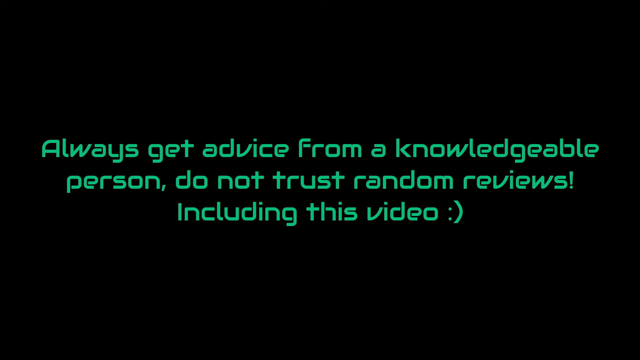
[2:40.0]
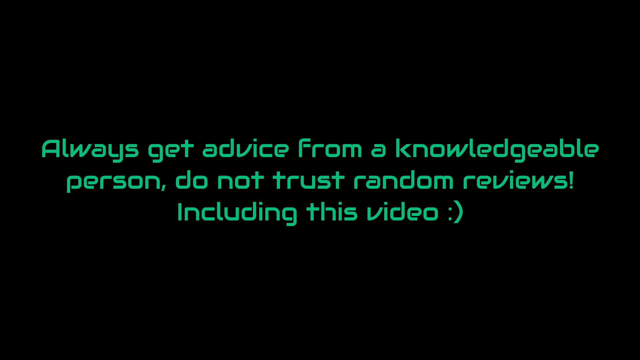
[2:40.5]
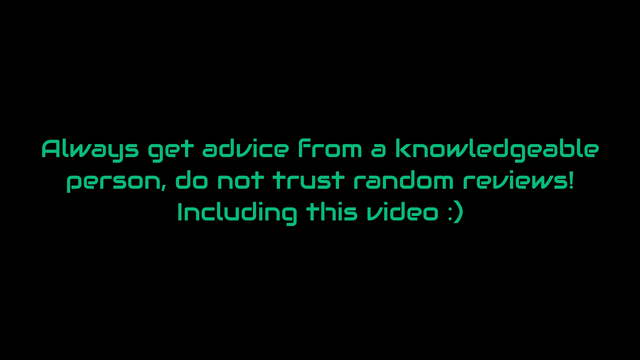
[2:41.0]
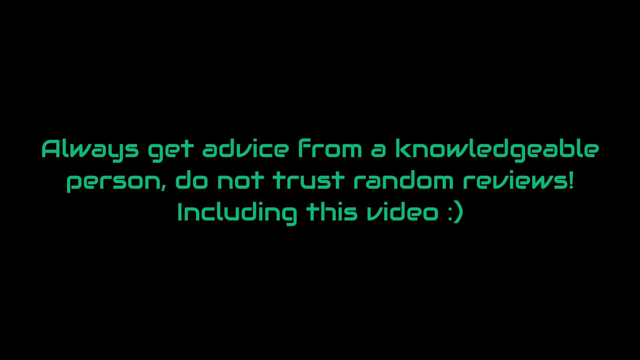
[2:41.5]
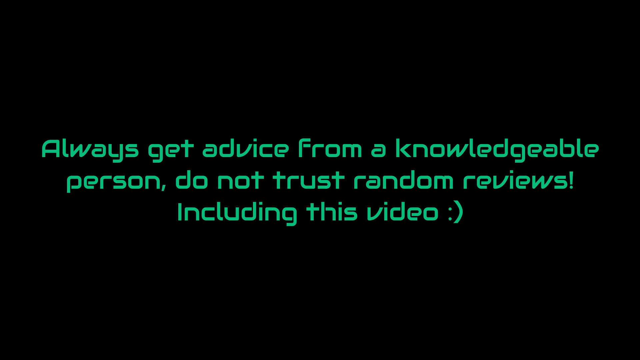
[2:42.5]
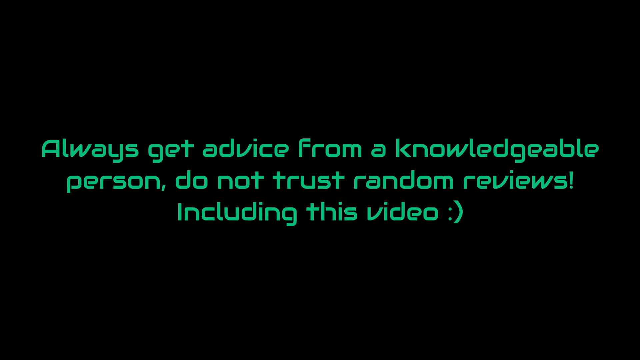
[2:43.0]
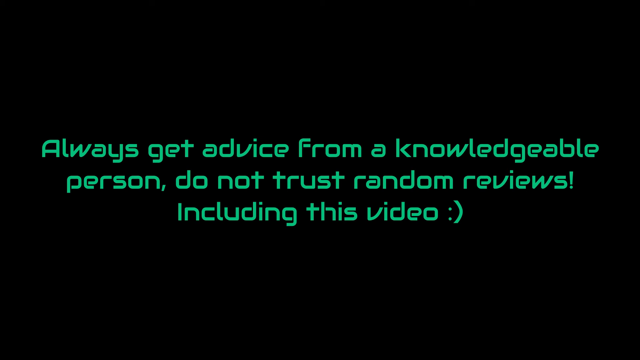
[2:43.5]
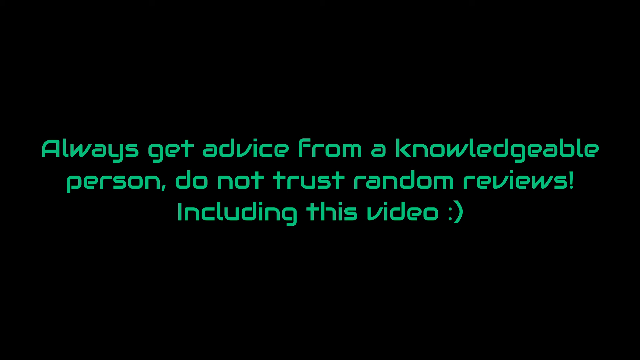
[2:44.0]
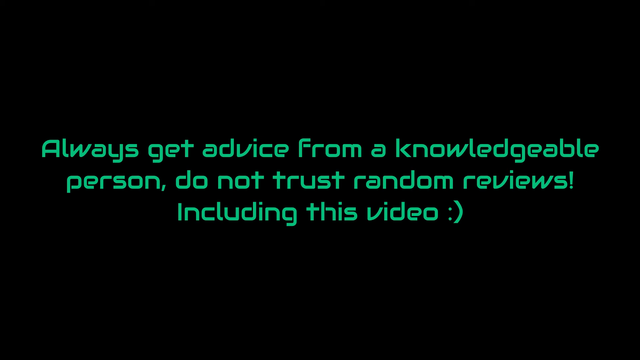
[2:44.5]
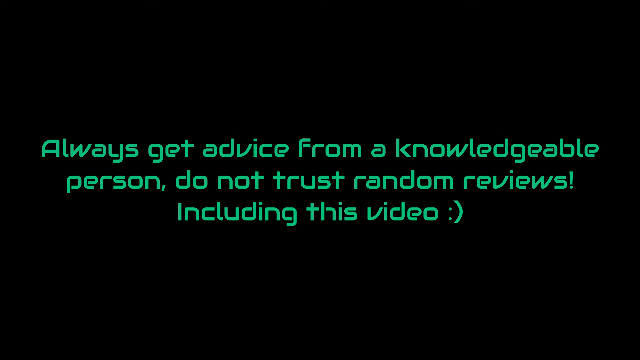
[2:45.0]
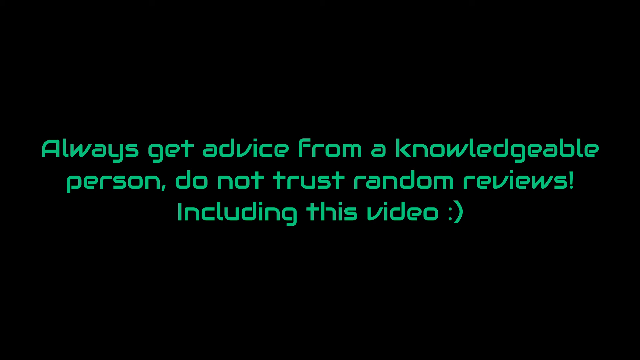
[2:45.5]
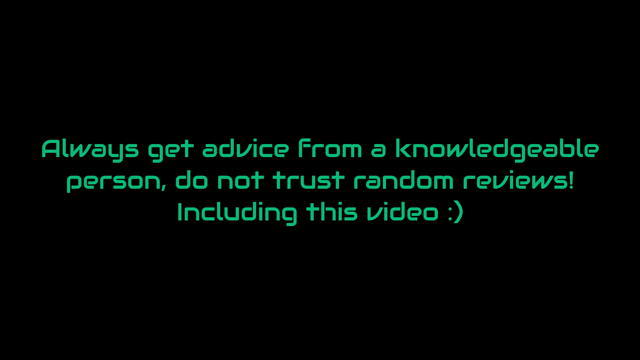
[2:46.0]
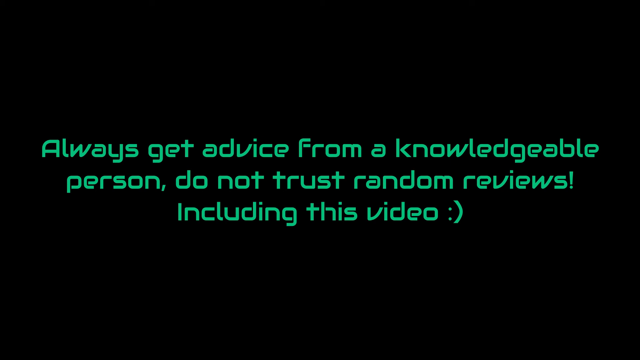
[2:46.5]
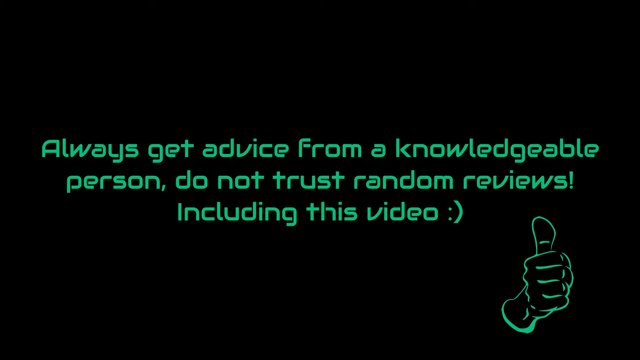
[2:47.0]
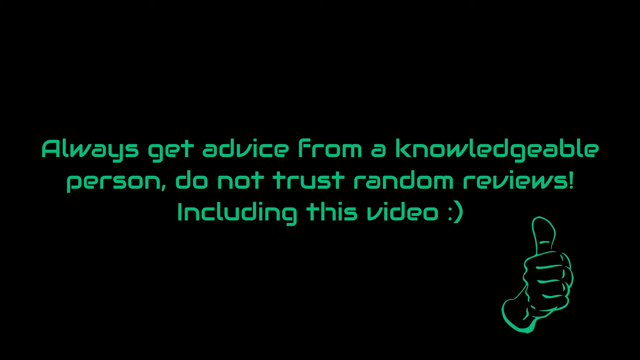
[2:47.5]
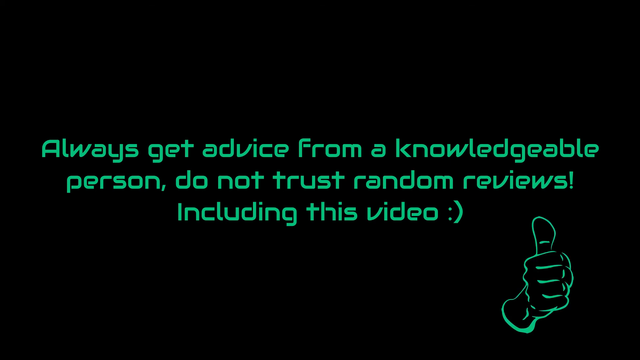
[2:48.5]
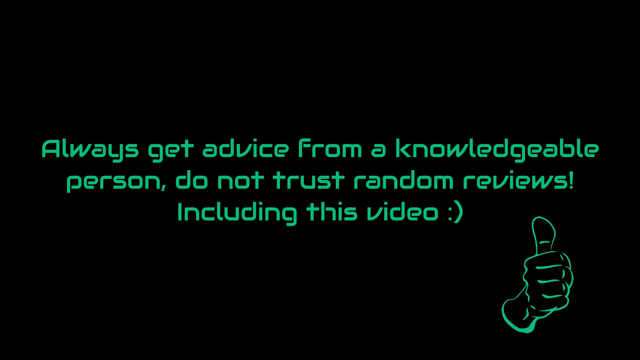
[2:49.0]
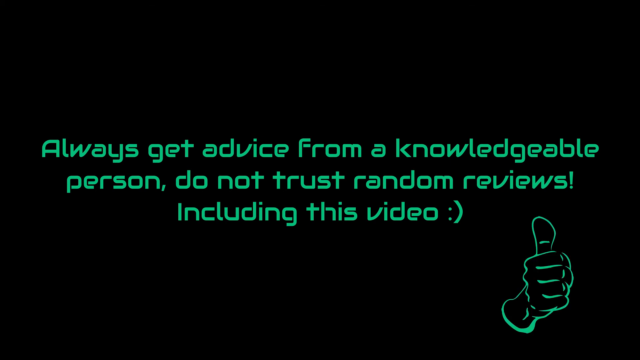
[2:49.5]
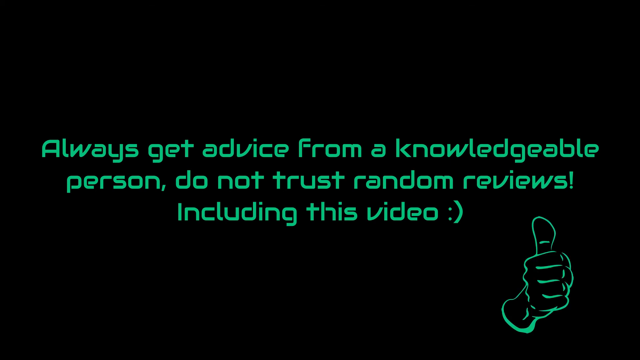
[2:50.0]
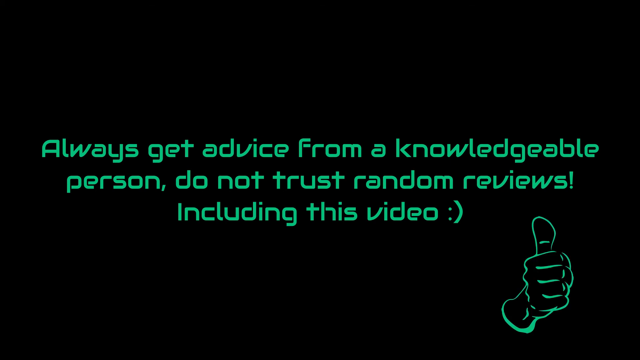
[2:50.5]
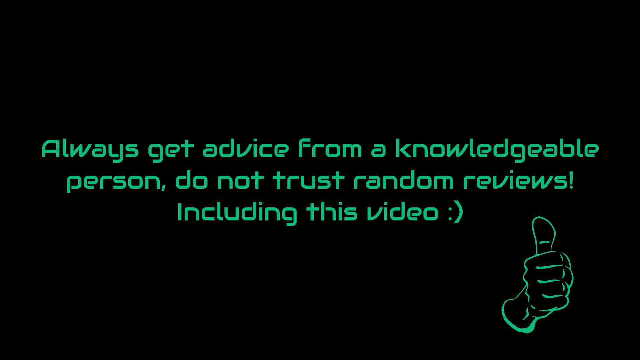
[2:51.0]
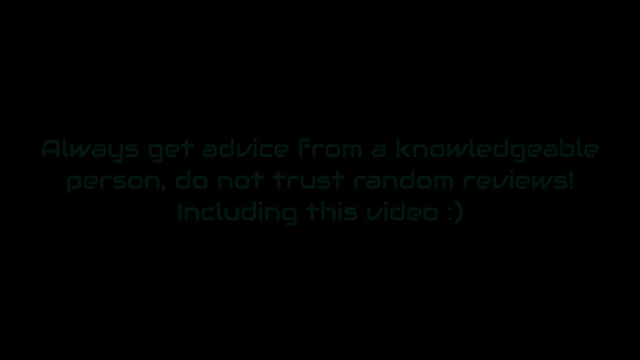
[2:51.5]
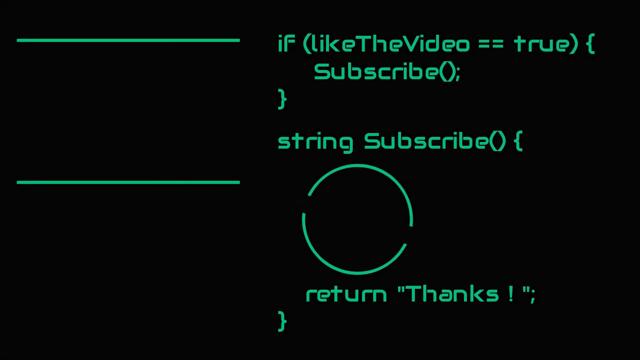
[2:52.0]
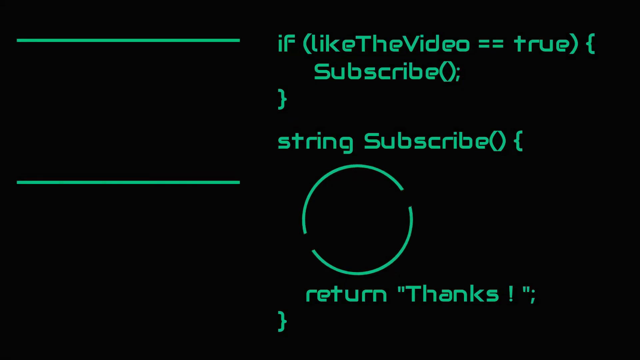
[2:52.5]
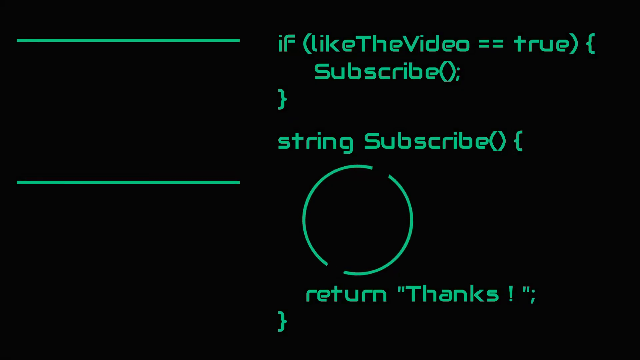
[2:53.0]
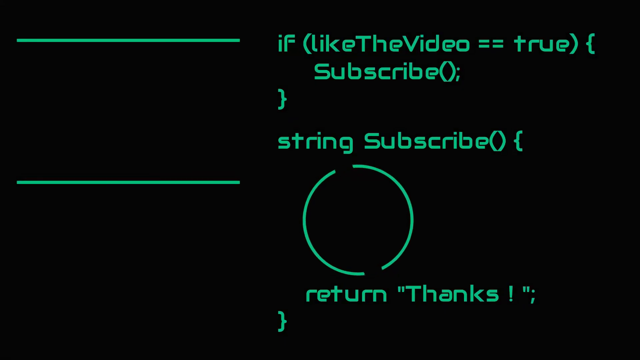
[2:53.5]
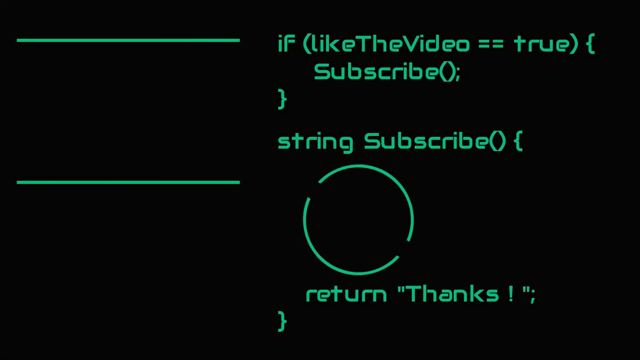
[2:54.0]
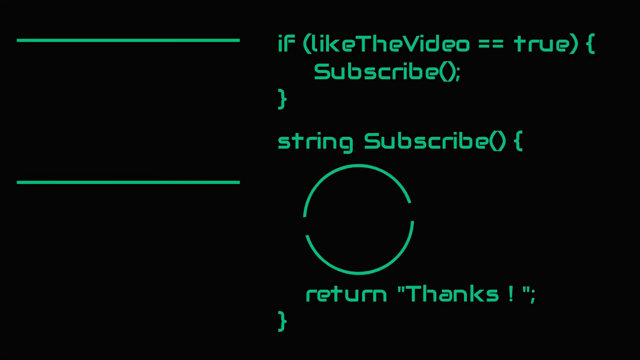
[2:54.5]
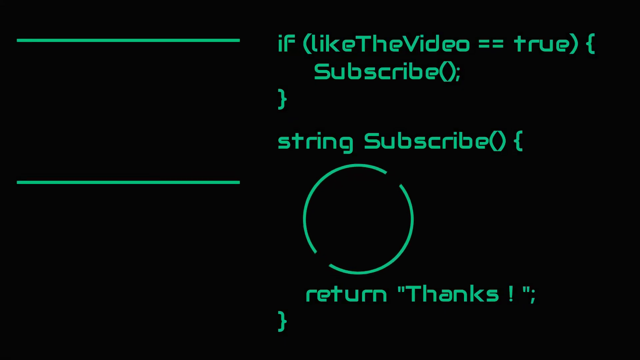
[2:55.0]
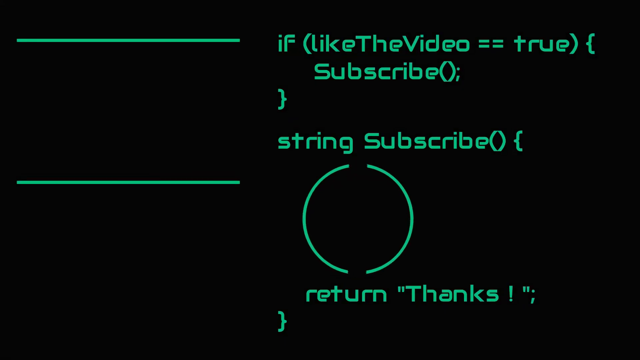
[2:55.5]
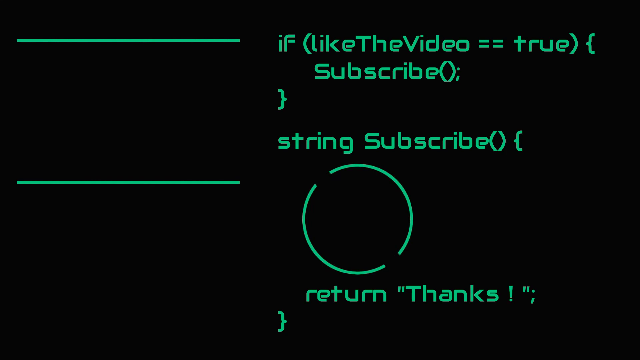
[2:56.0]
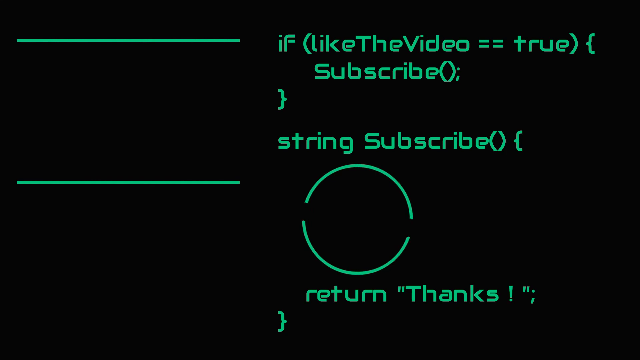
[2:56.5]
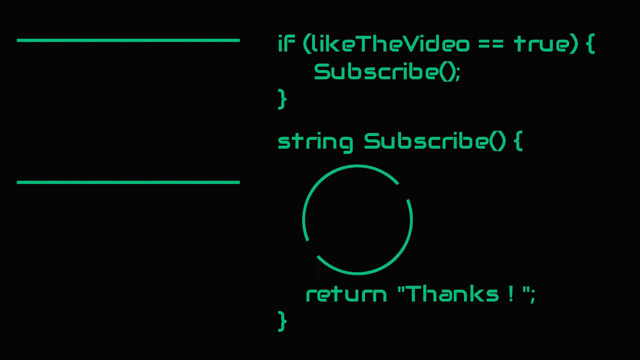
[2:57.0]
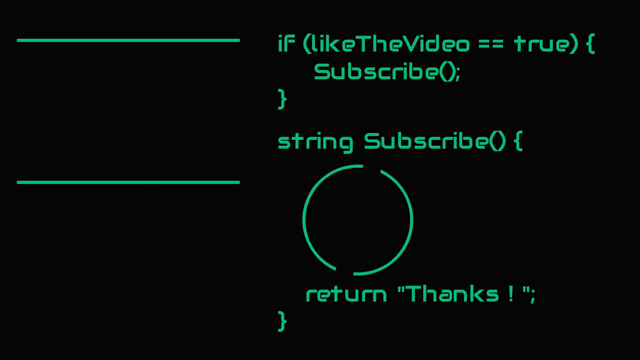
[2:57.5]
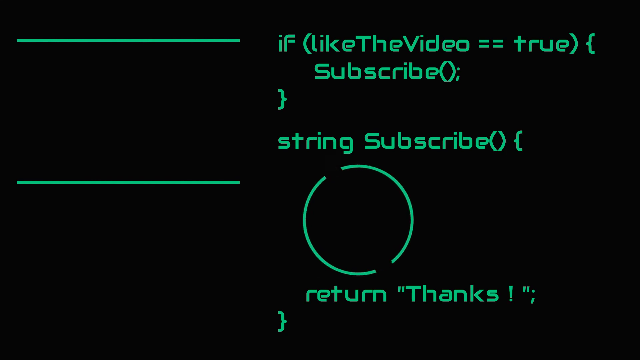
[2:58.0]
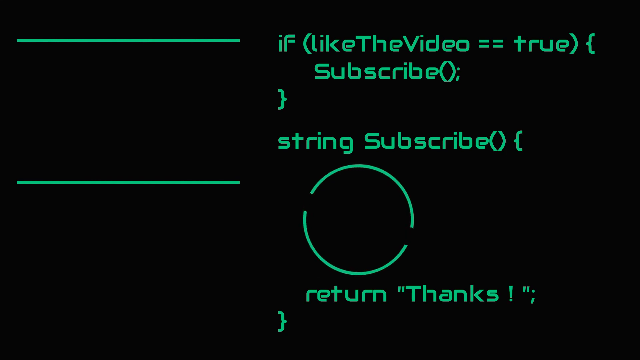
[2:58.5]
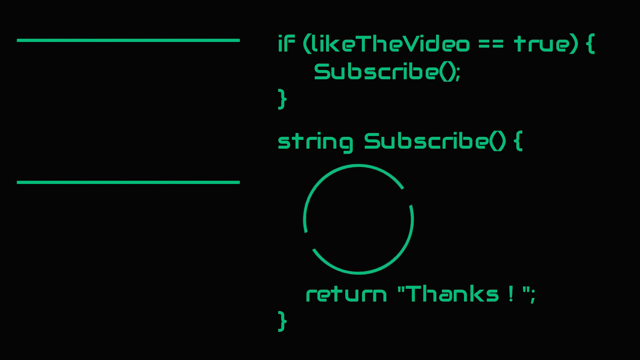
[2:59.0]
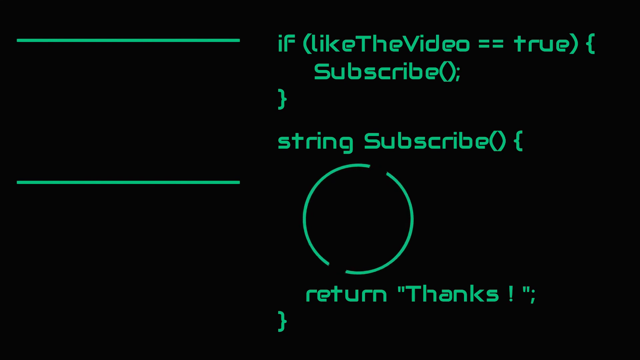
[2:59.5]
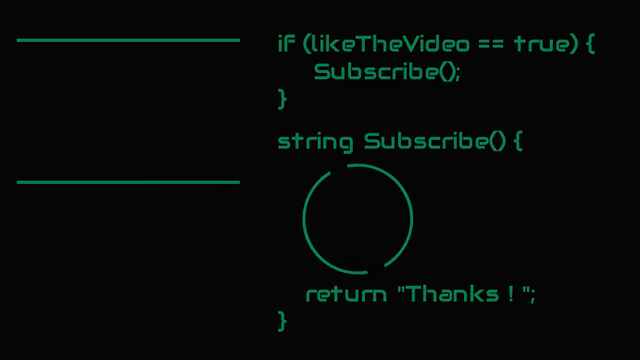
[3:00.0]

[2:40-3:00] The text "always get advice from a knowledgeable person. Do not trust random reviews, including this video" remains on screen for a while. A clip-art hand with its thumb pointing up appears in the bottom right part of the screen. What seems to be the outro follows, written in what looks like programming script, reading "if the video equals true, subscribe, string, subscribe, return, thank". The video then stops.